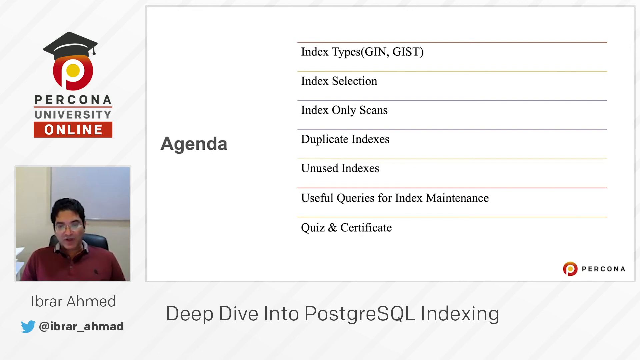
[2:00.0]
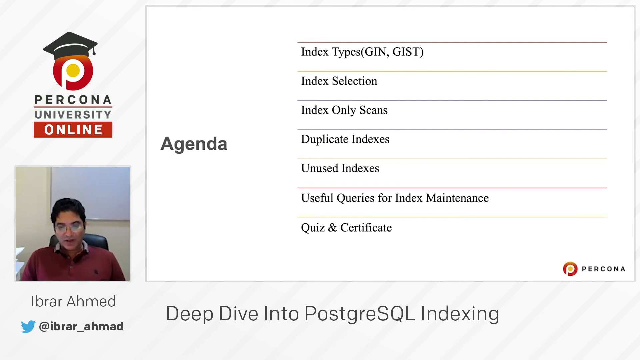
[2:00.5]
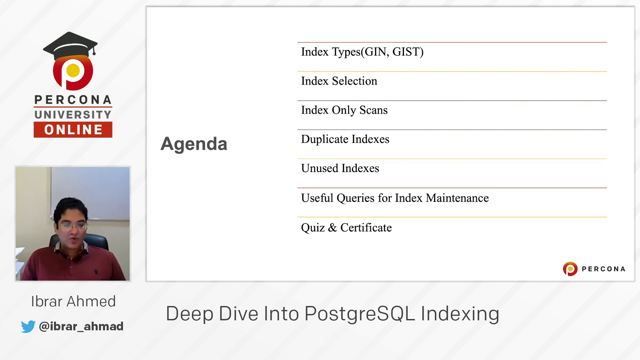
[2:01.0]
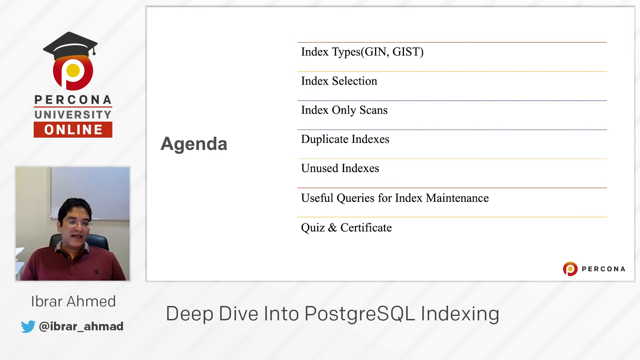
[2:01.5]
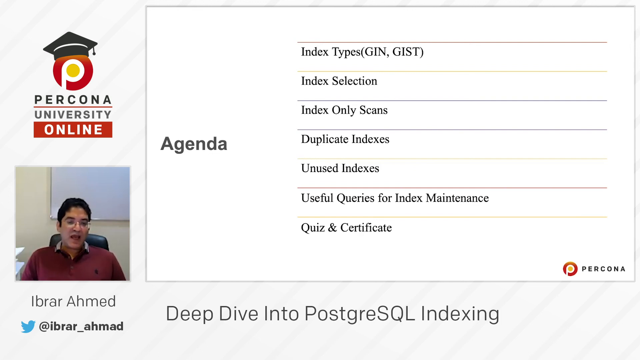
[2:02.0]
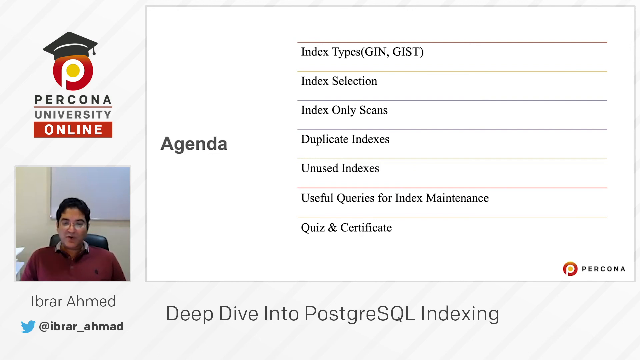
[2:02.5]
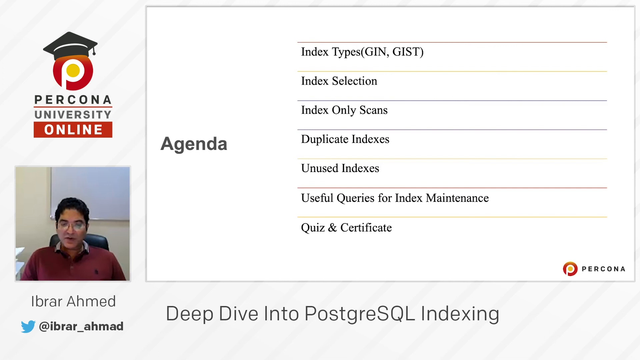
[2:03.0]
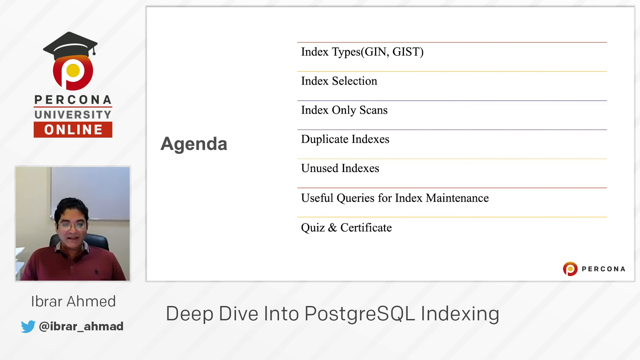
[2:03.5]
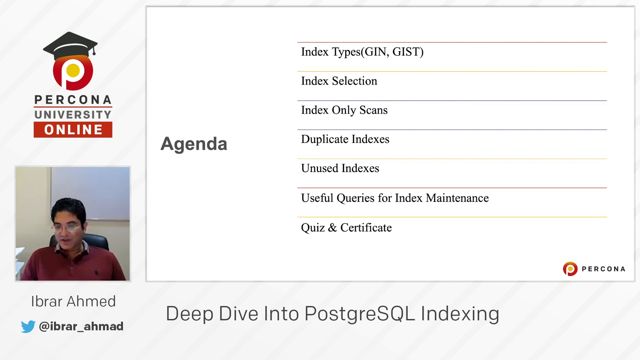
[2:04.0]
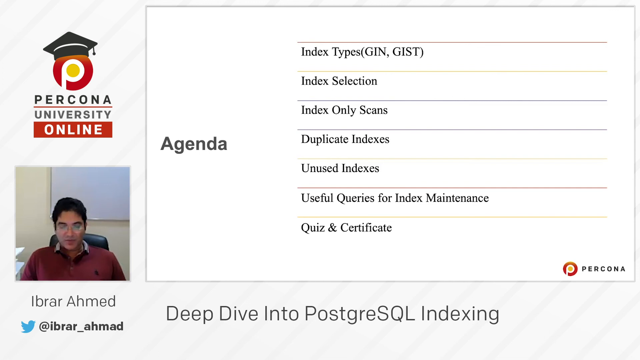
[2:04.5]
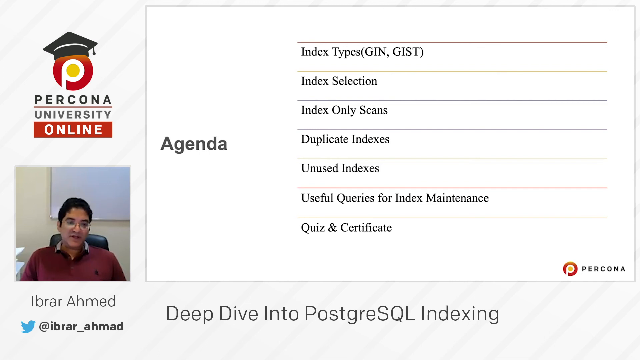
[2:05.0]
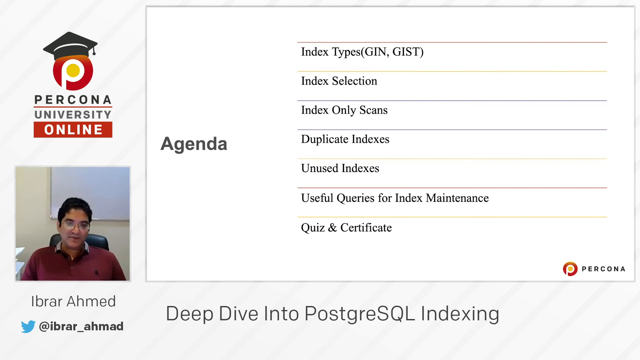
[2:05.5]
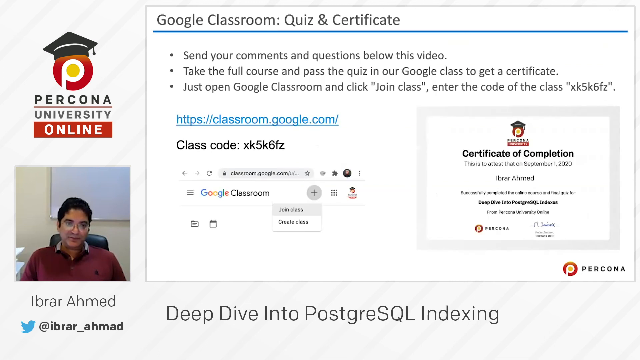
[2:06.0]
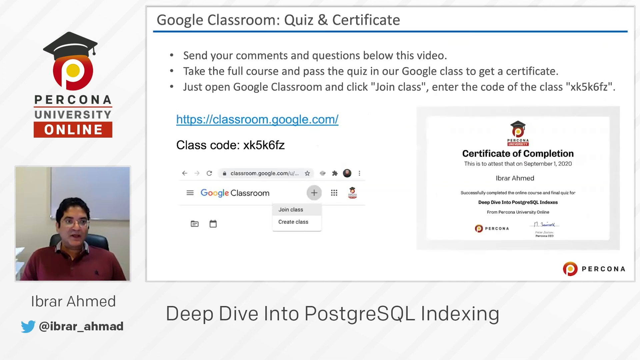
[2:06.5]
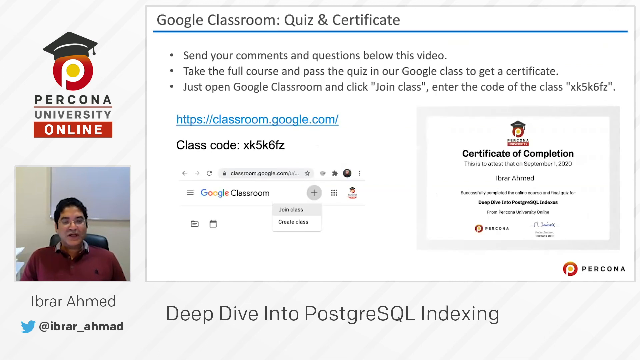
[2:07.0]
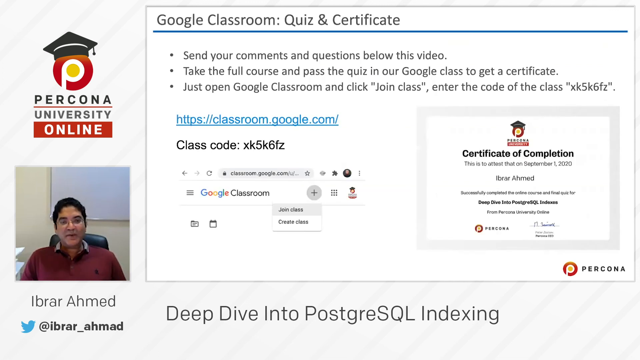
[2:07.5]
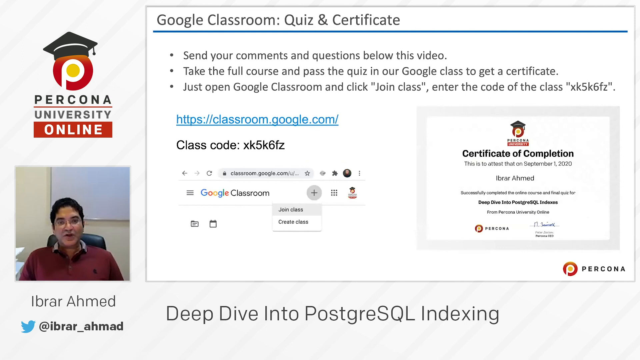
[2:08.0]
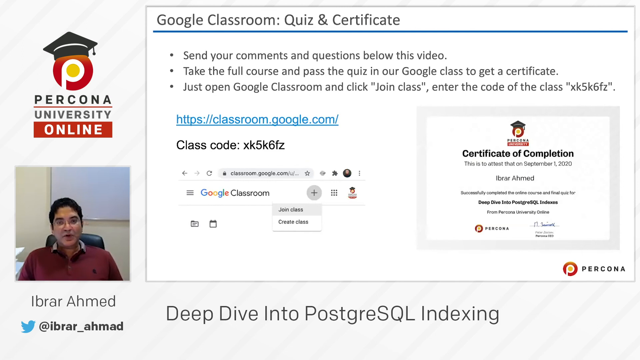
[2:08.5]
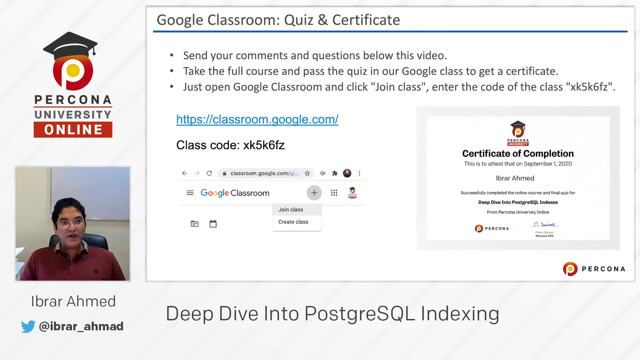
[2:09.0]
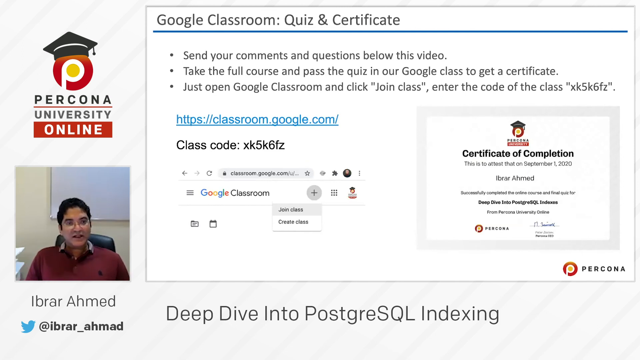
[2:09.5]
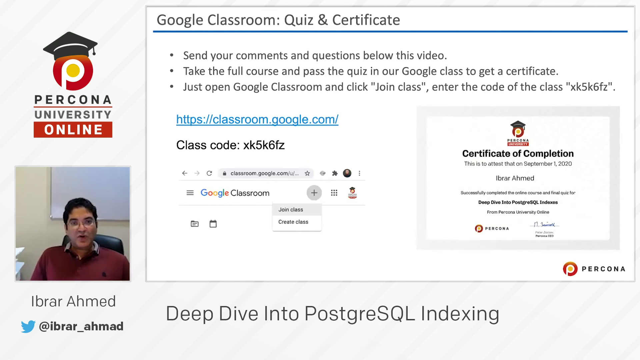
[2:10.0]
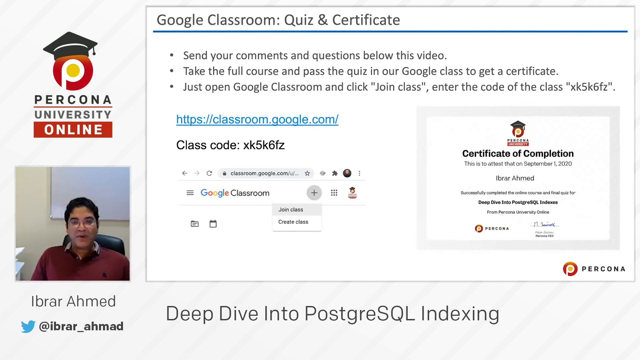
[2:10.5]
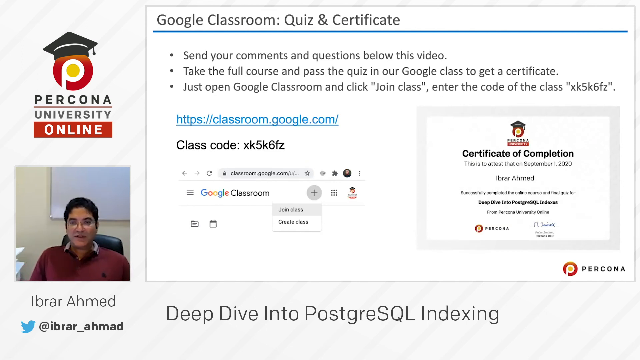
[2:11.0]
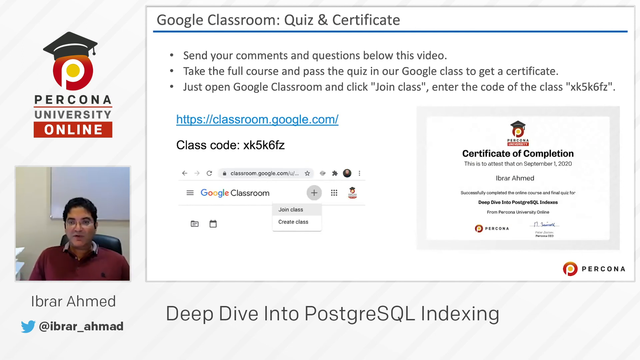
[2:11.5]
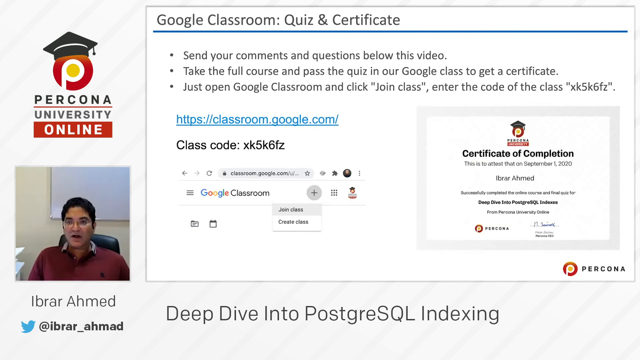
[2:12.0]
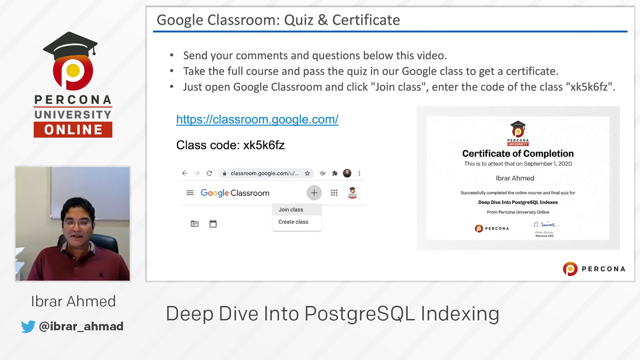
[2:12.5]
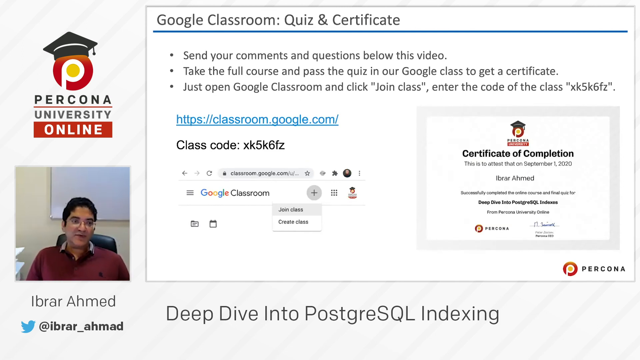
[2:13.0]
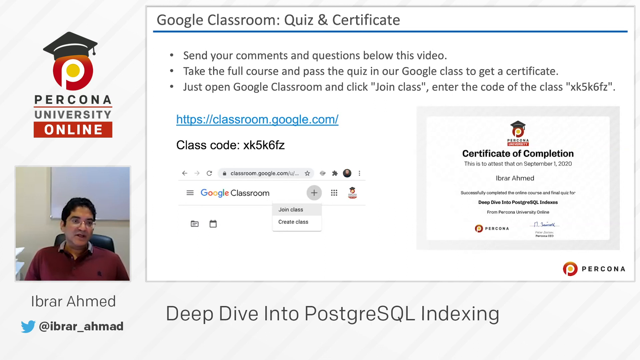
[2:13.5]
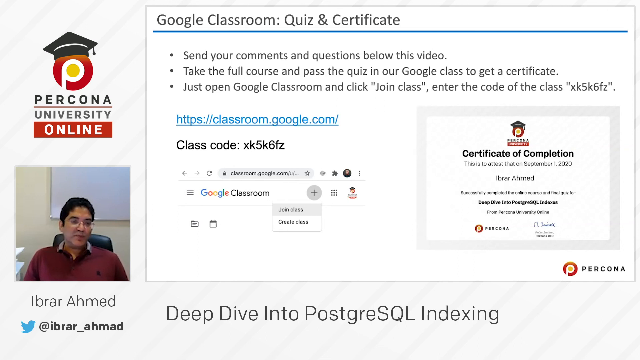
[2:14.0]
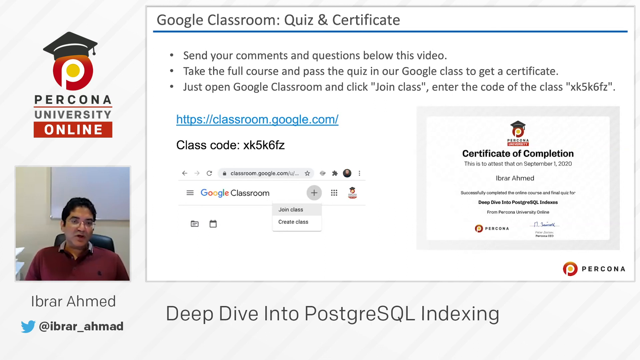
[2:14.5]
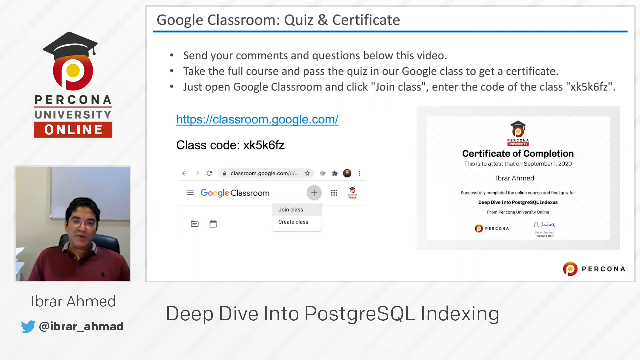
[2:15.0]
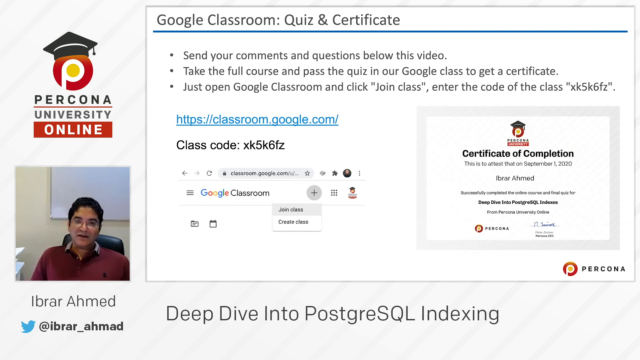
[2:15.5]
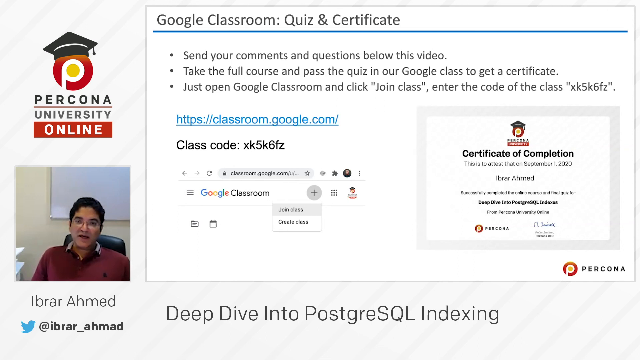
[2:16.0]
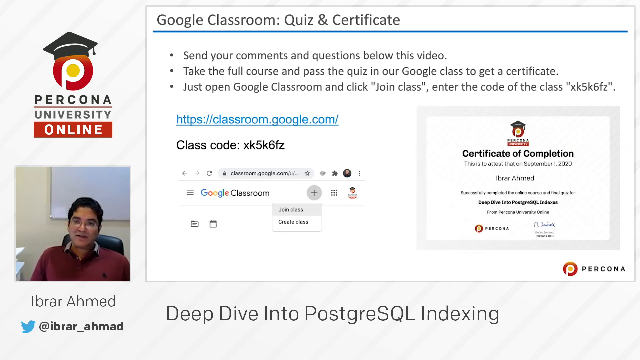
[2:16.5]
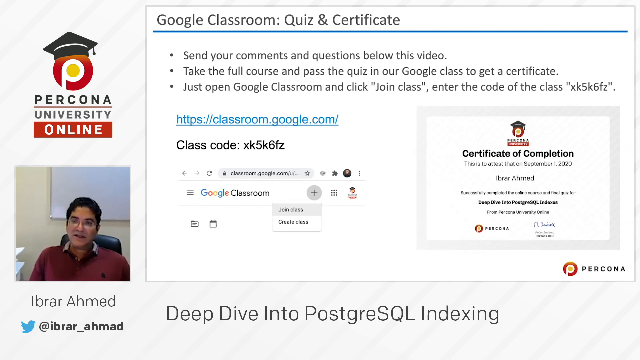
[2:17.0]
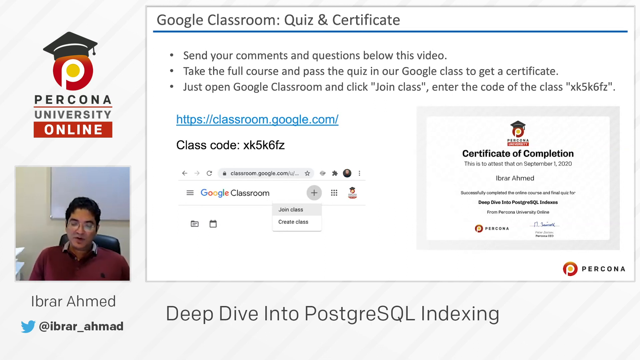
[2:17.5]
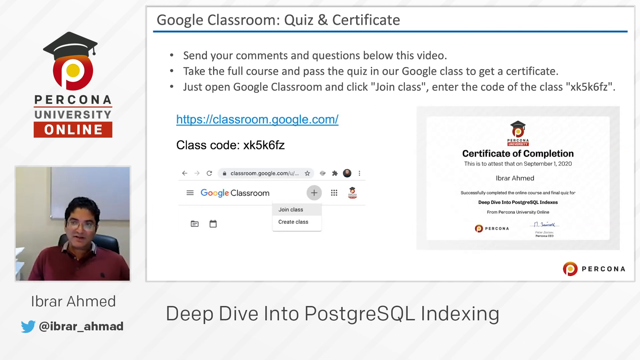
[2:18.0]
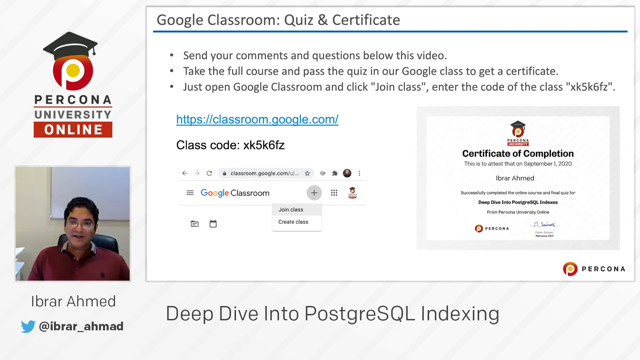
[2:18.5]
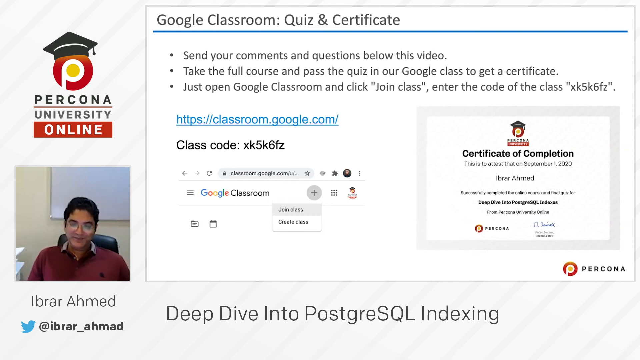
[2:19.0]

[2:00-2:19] A large white box has black text reading "Agenda," with red, yellow, and gray lines throughout the box and black text between each line reading "Index Types, GIN, GIST, Index Selection, Index Only Scans, Duplicate Indexes, Unused Indexes, Useful Queries for Index Maintenance, and Quiz and Certificate." A black icon at the bottom reads "Percona," along with a small red circle with a white P and a yellow center. The same red circle is in the top left corner wearing a graduation hat, with black and gray text reading "Percona University" with a red line in between, and a red banner with bold white text reading "Online." A video stream in a square box shows an Indian man with black hair, wearing glasses and a red collared t-shirt, talking to the camera. His name beneath reads "Ibrar Ahmed," with his Twitter handle, "at Ibrar_Ahmed," and a small blue bird next to it. The title of the video reads "Deep Dive into PostgreSQL Indexing." He transitions to another screen reading "Google Classroom, Quiz and Certificate" at the top with a very large blue line. Bullets read "send your comments and questions below this video. Take the full course and pass the quiz in our Google Class to get a certificate. Just open Google Classroom and click Join Class. Enter the code of the class XK5K6FZ." A link for classroom.google.com appears in blue along with the class code XK5K6FZ, options to click "Join Class" and "Create Class" on Google Classroom, and a certificate of completion reading "this is to attest that on September 1st, 2020, Ibrar Ahmed successfully completed the online course for the Deep Dive into PostgreSQL Indexing."